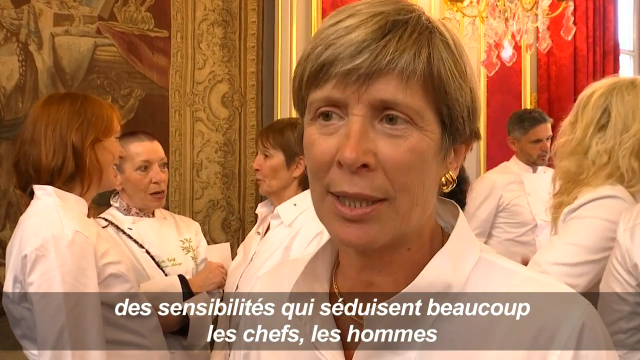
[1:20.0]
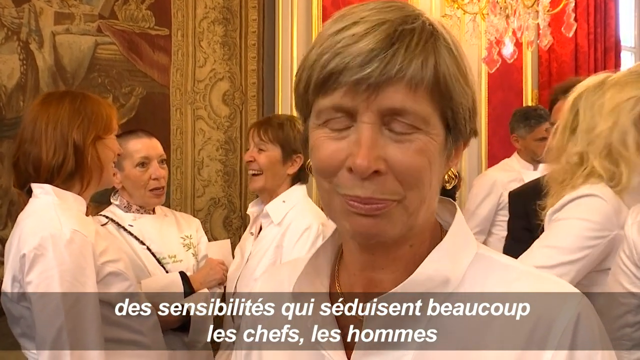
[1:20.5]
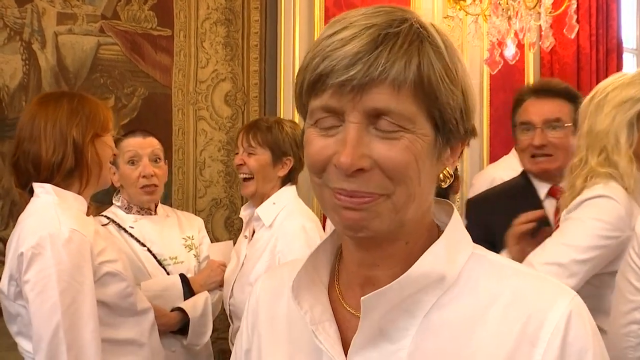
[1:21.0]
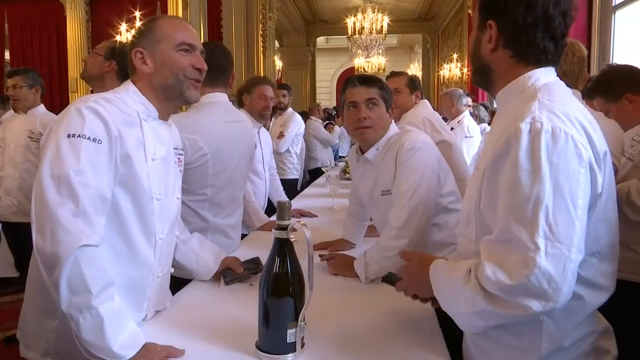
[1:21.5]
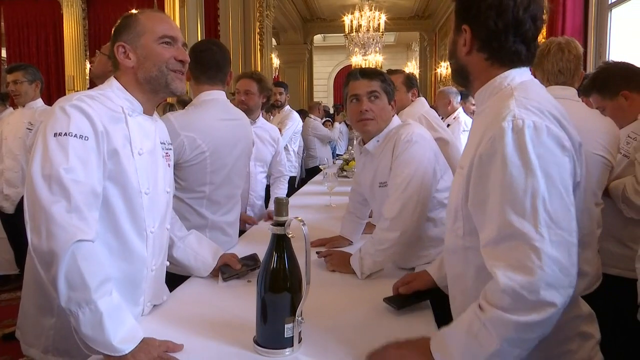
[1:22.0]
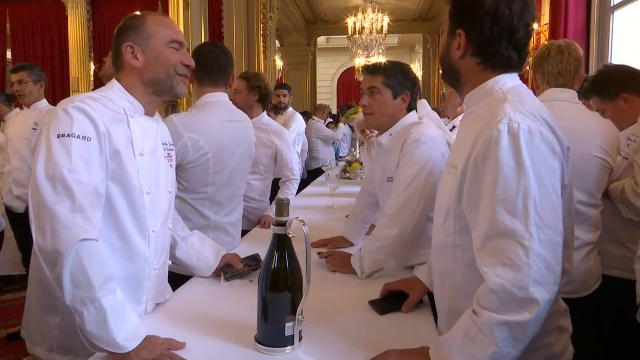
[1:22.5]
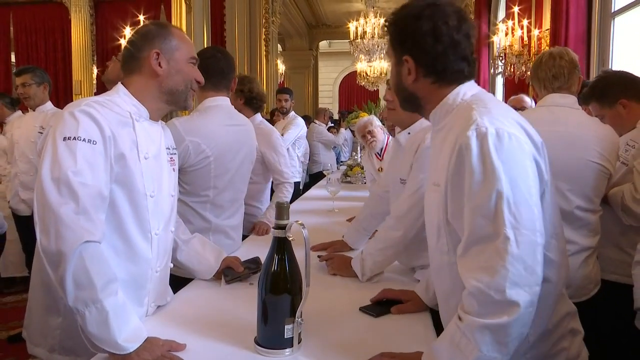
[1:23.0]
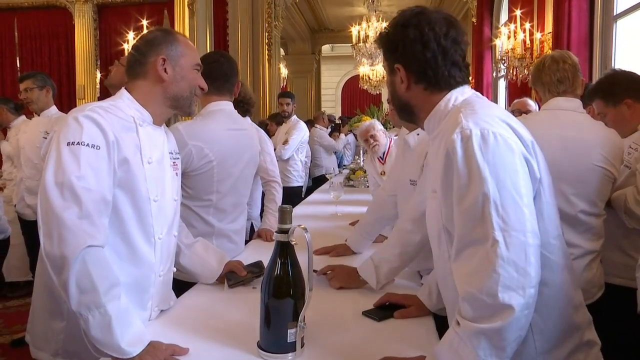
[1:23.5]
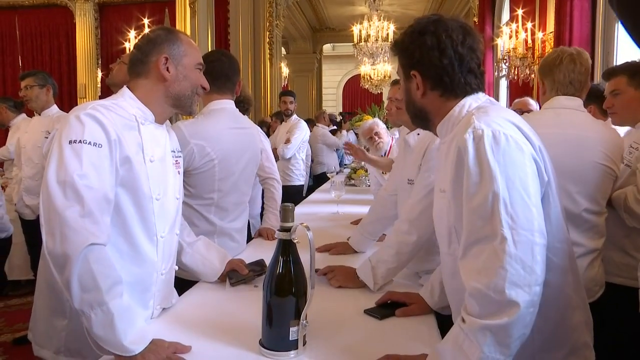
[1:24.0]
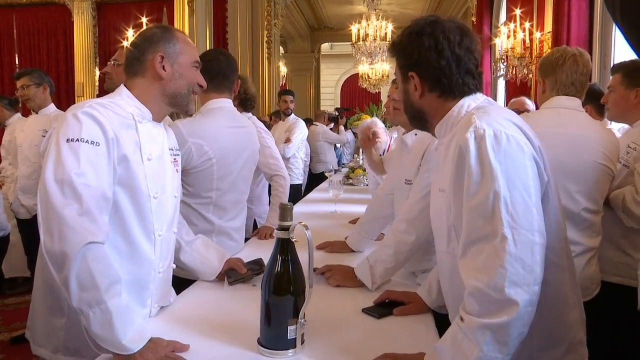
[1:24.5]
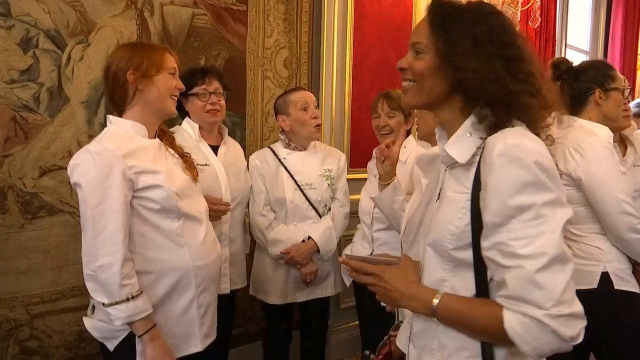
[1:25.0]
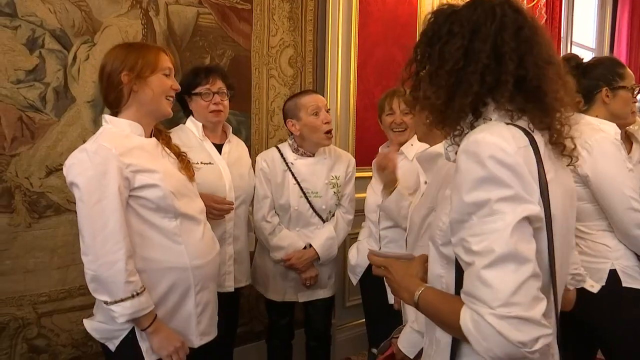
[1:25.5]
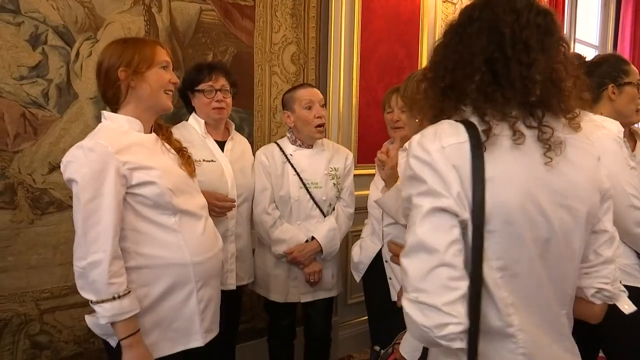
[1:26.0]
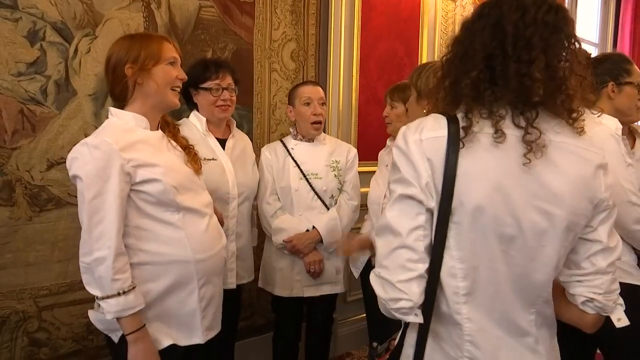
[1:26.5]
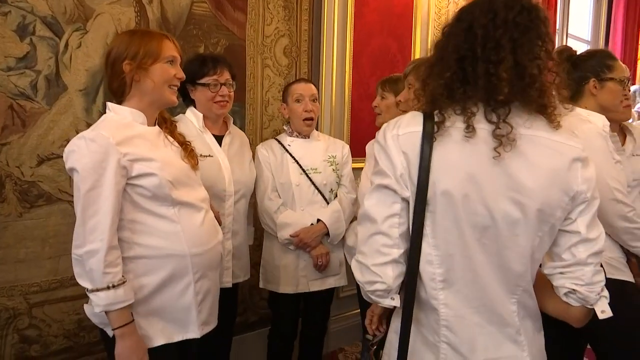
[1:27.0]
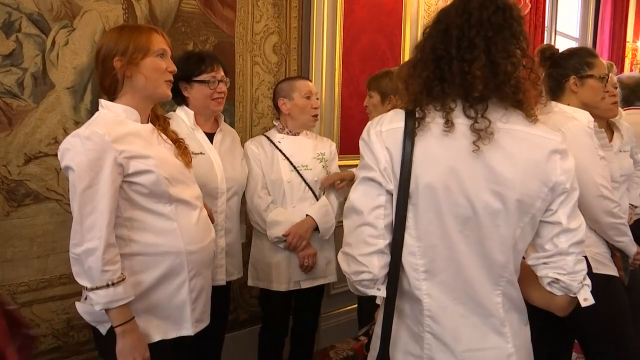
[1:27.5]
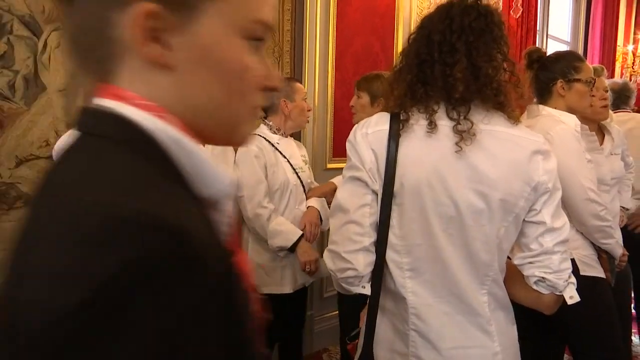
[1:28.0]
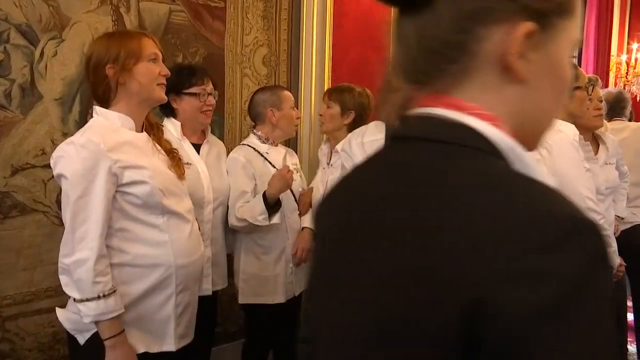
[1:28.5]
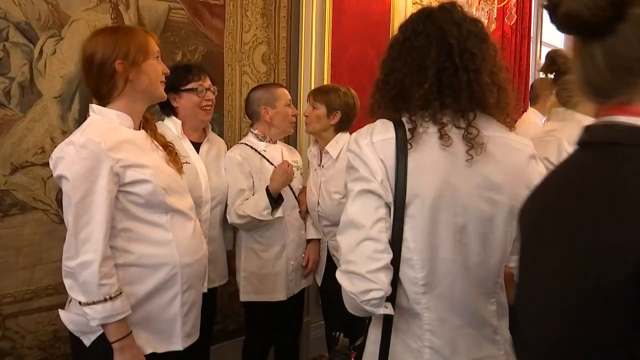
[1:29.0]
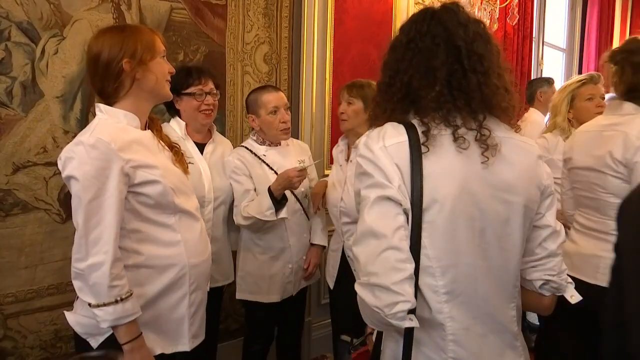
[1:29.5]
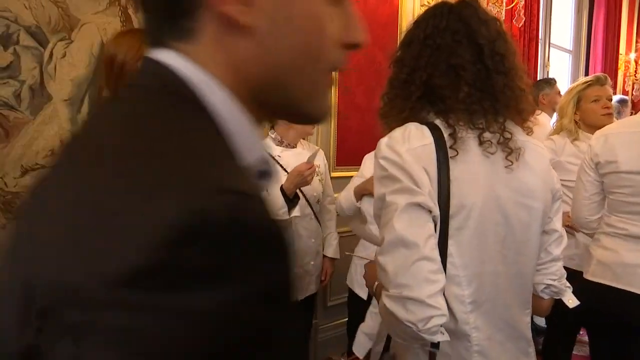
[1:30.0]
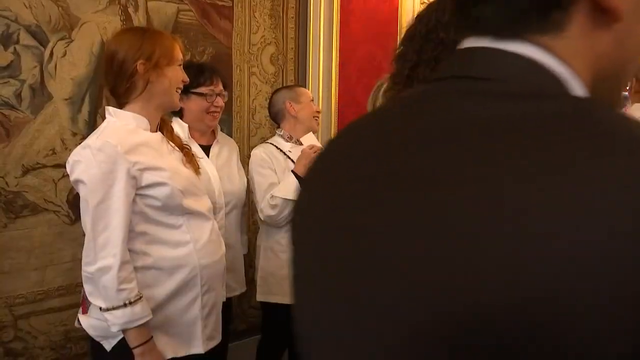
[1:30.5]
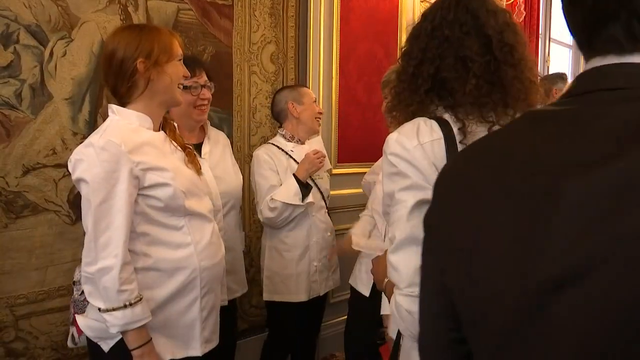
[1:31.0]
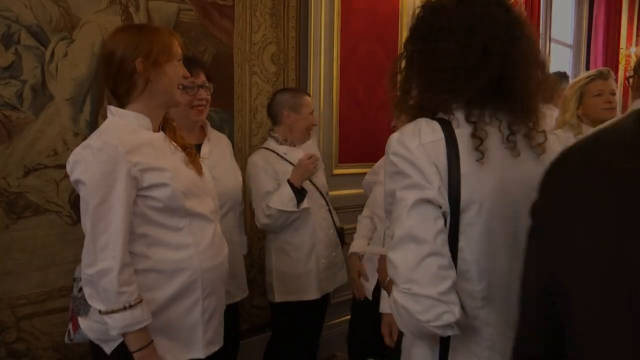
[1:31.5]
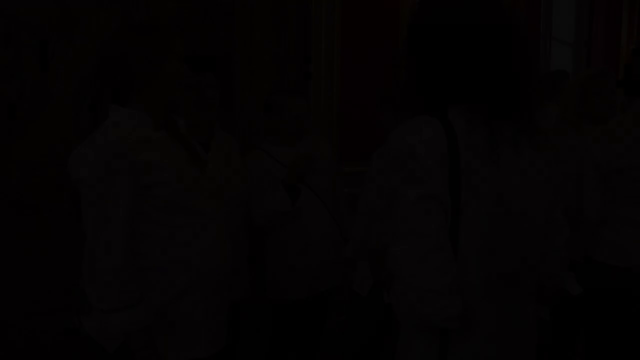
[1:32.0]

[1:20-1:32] A chef with short hair, earrings and brown eyes, wearing a white jacket, talks to the camera. Behind her, three women, all chefs, are talking to each other, and on her other side other conversations are going on. A big long table is shown with chandeliers above it and fancy room decorations. All the chefs wear white chef jackets, and wine is visible. A group of more women stands by a wall painting together; they look like they are enjoying each other's company. The video then fades out to black.